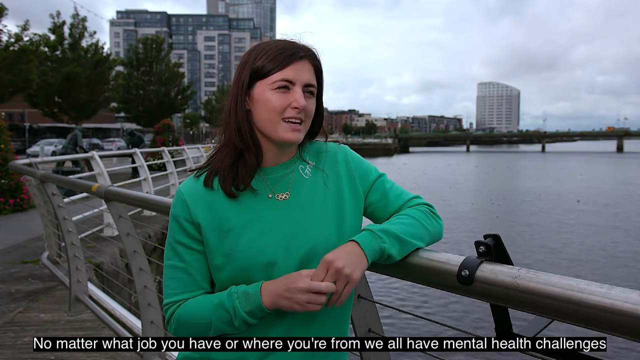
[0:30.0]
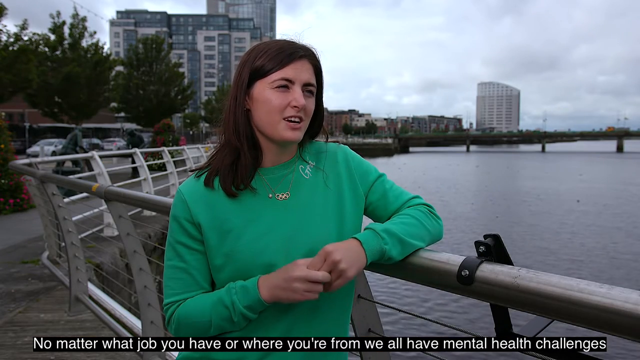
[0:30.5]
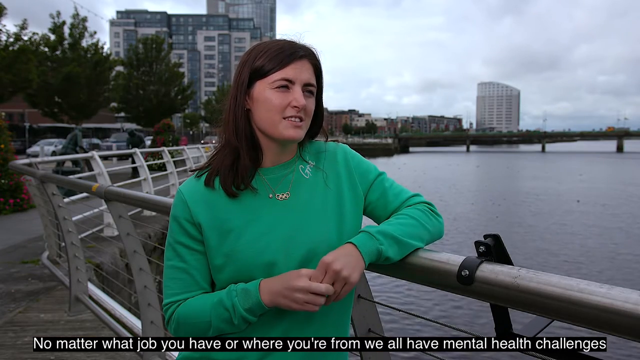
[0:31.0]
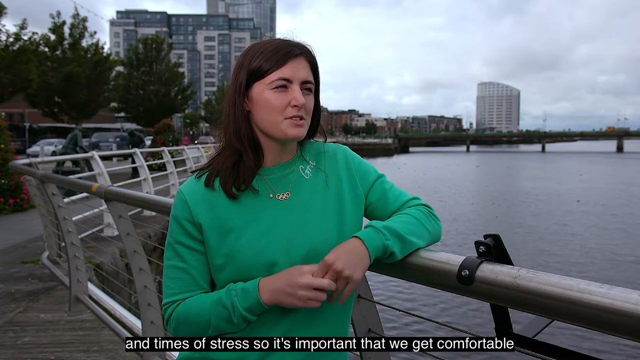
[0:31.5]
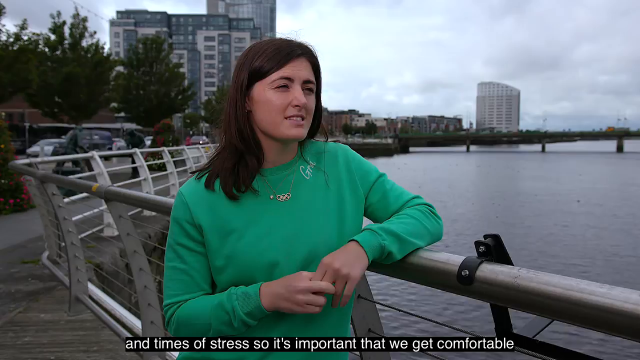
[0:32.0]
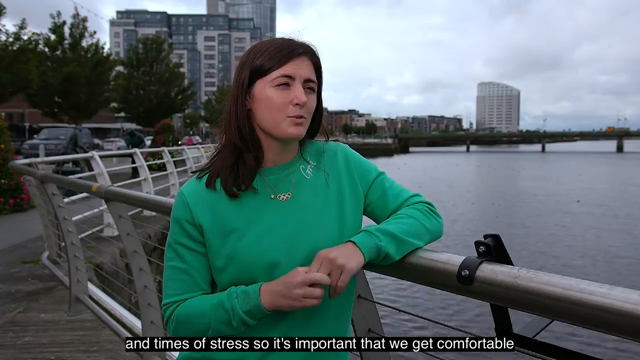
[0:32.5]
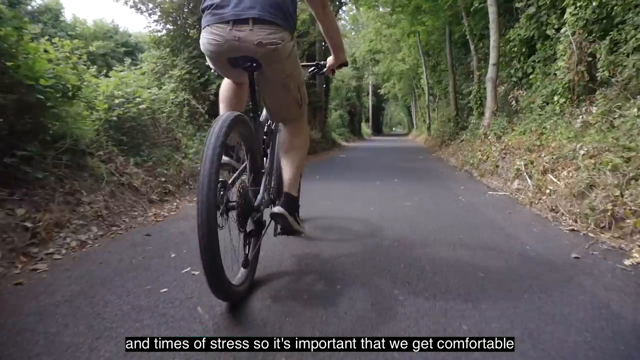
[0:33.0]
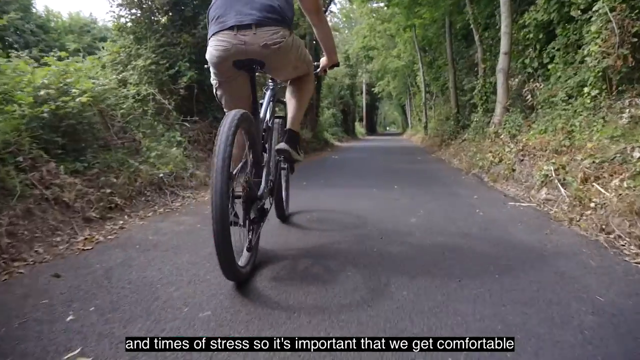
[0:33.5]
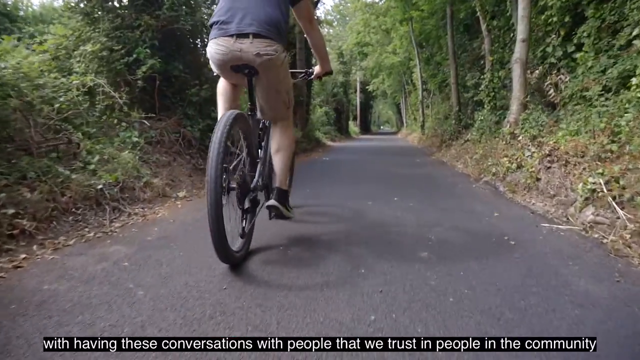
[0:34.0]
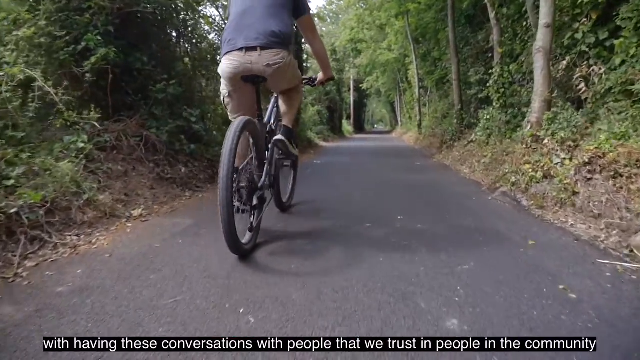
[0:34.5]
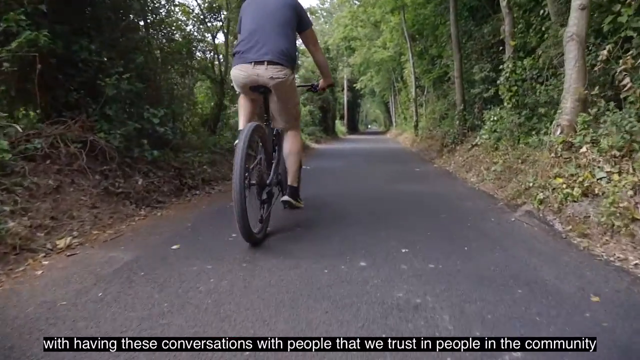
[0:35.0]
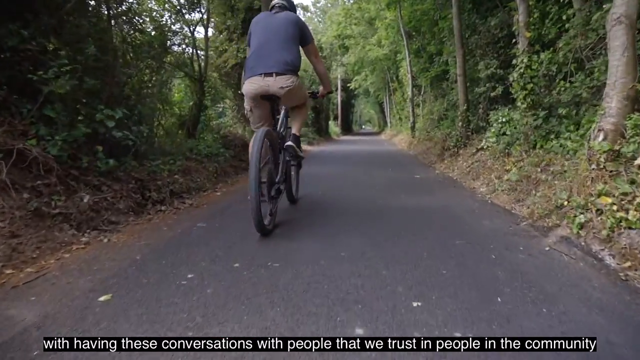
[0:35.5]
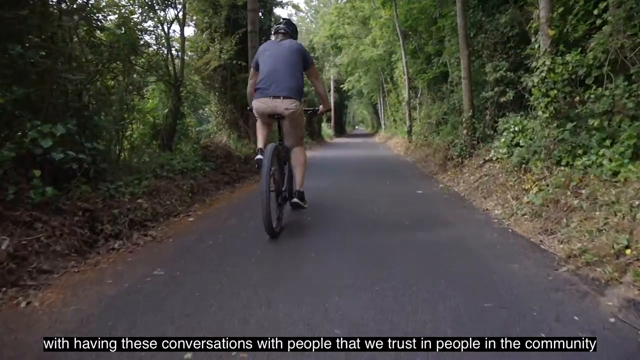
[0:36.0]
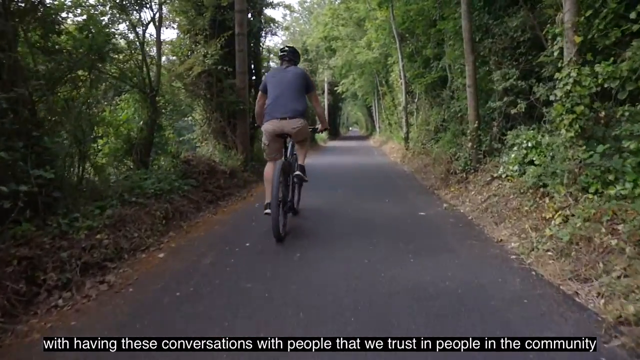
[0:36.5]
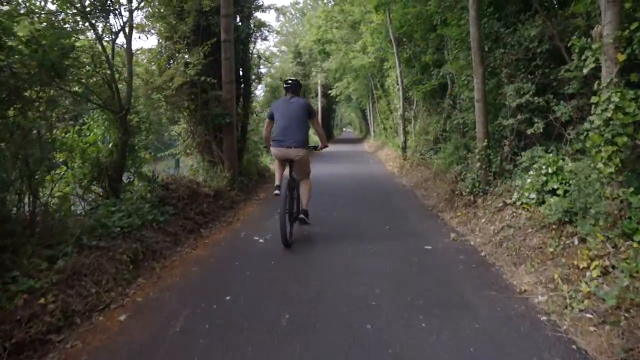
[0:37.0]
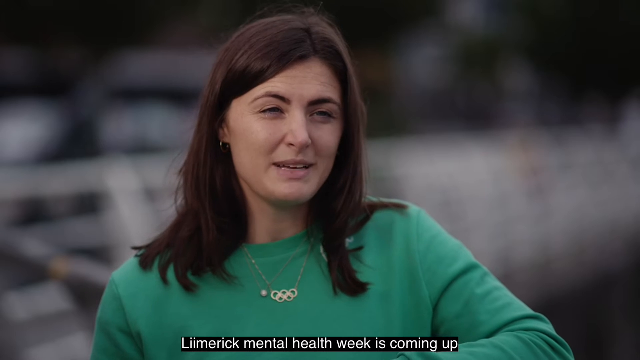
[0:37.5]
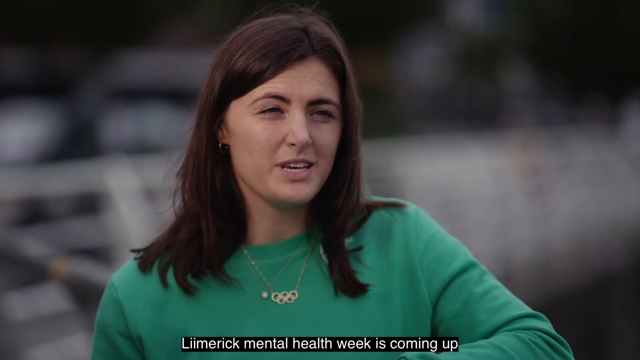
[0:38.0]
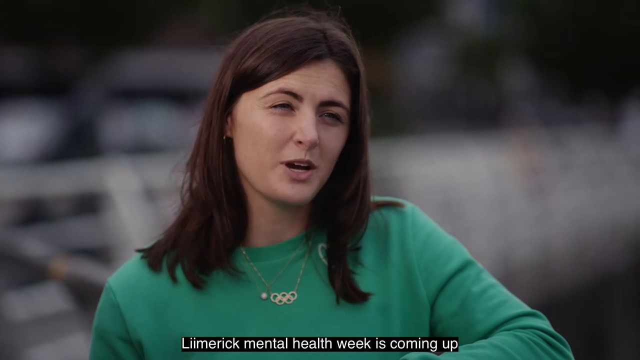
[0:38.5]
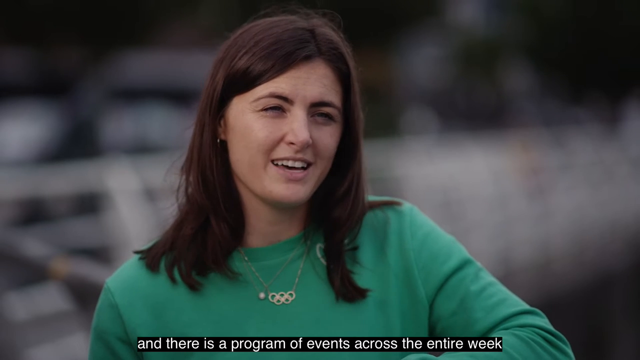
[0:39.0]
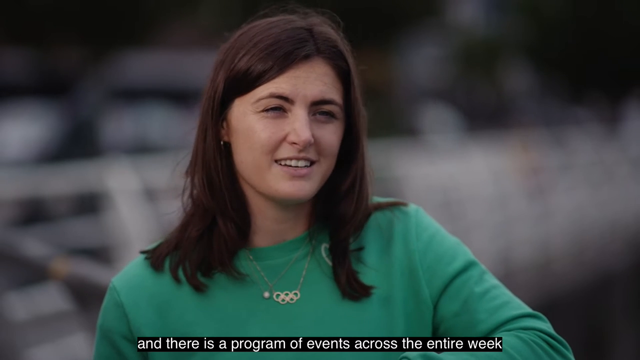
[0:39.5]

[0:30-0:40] The woman continues speaking to the camera. A cut shows a small paved trail in the woods, with the camera following behind a bicyclist riding down the trail. The camera is very low, roughly at the tire level of the bike. Trees overhang each side of the straight path, creating a tunnel-like effect. The man rides forward, wearing a blue shirt, a black helmet and what appear to be tan shorts. As the camera follows, it starts to rise slightly, then another cut returns to the interviewee.